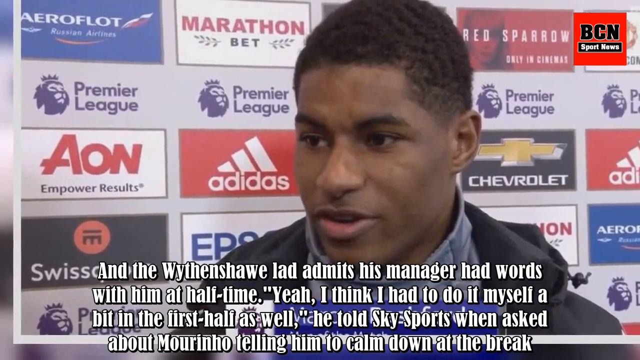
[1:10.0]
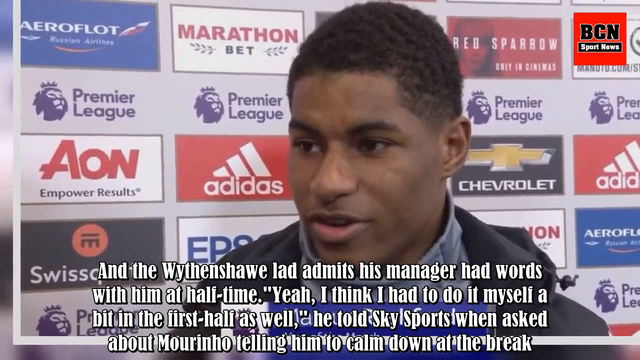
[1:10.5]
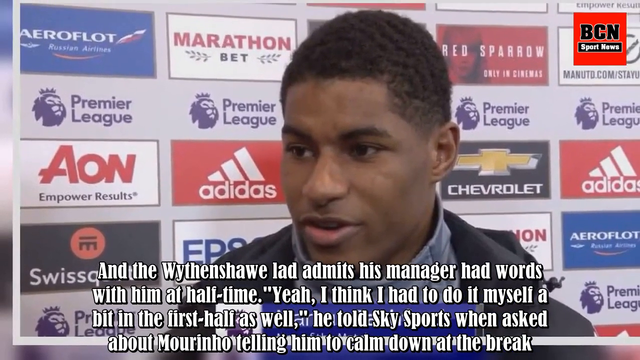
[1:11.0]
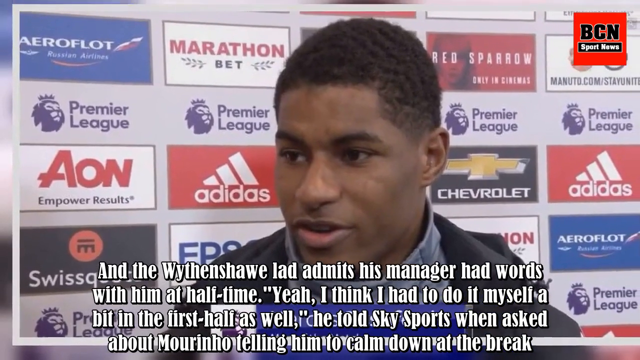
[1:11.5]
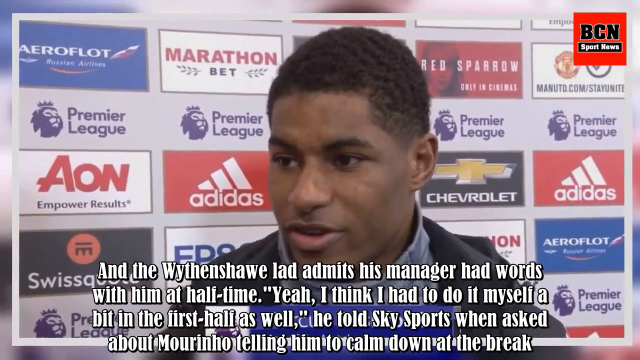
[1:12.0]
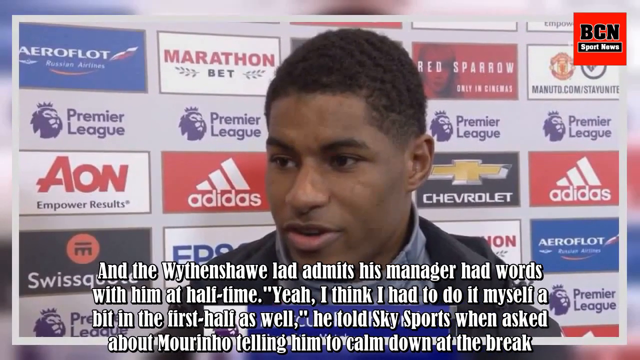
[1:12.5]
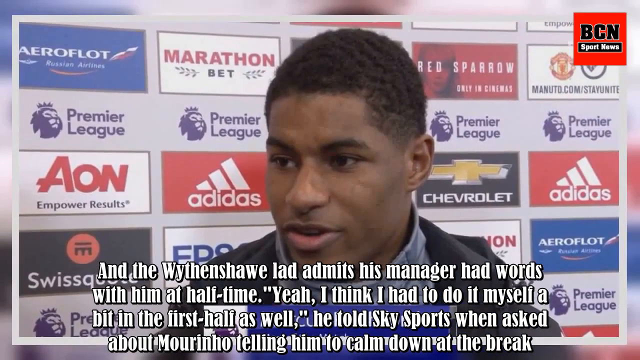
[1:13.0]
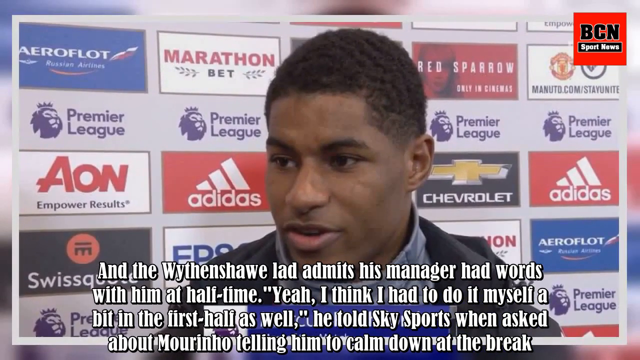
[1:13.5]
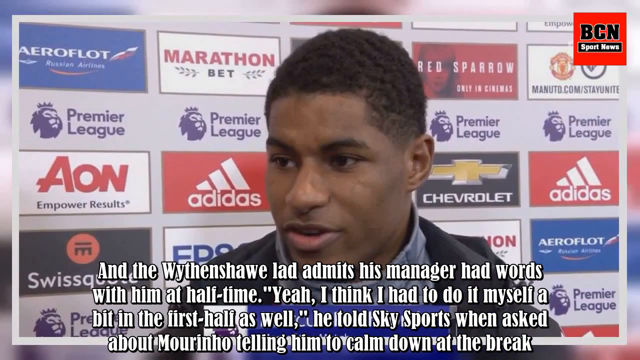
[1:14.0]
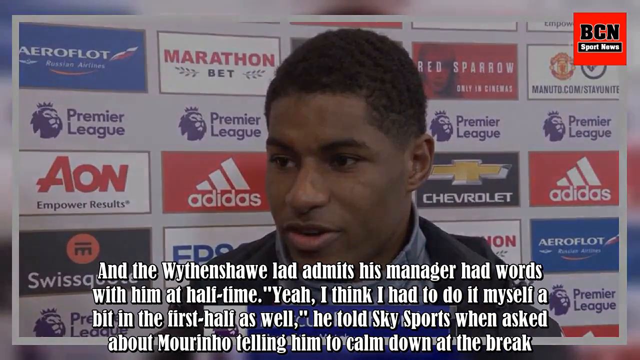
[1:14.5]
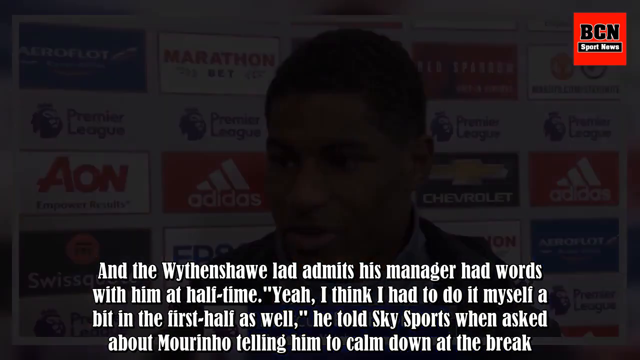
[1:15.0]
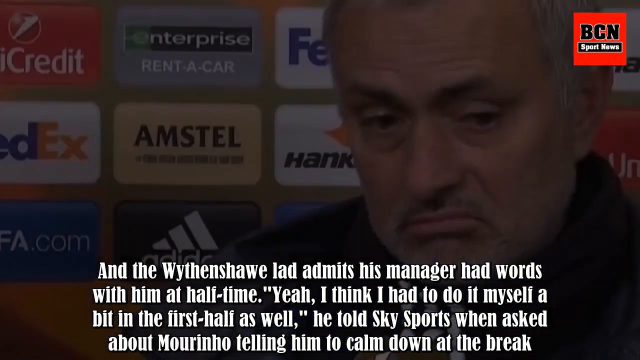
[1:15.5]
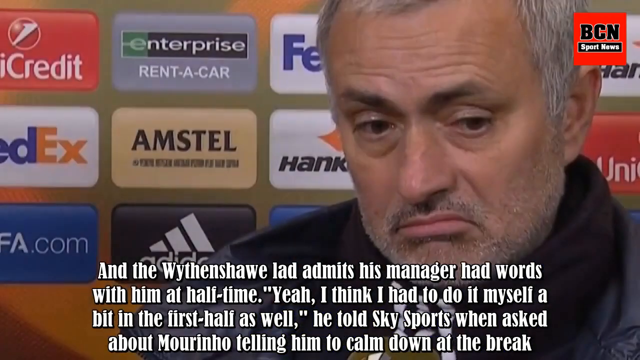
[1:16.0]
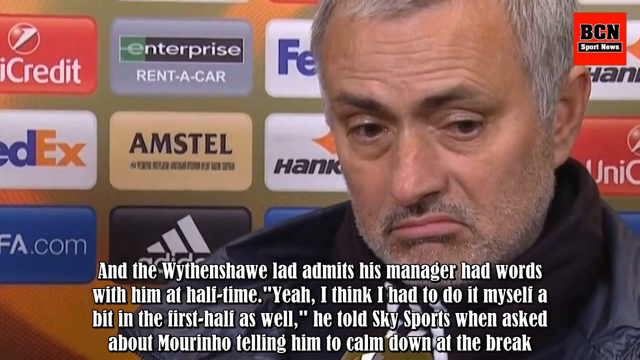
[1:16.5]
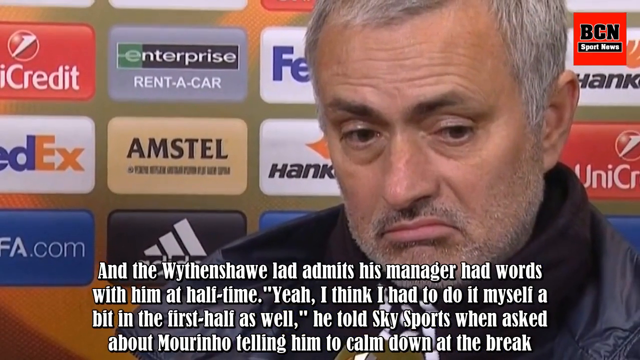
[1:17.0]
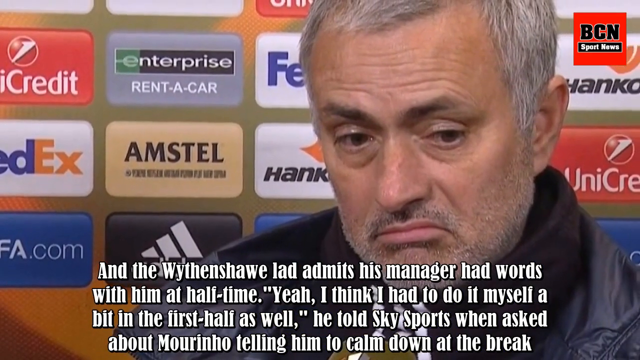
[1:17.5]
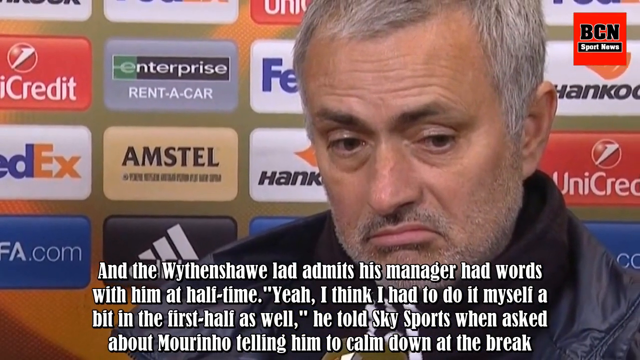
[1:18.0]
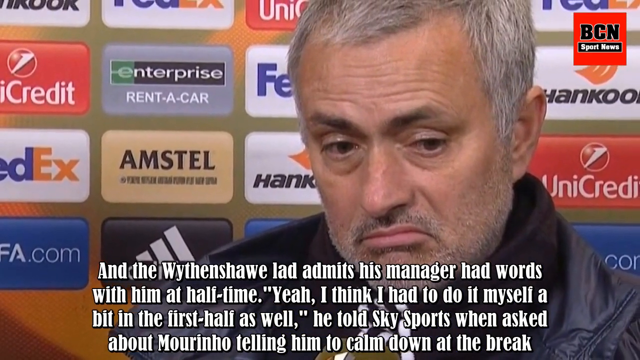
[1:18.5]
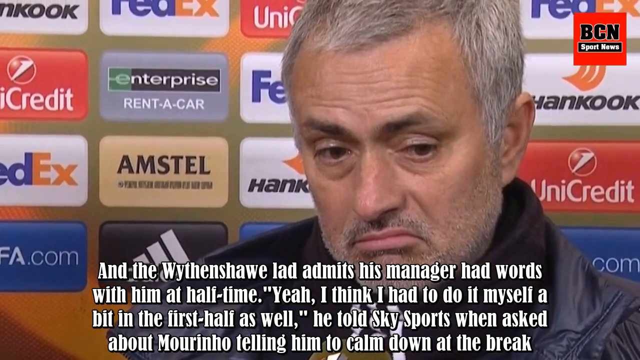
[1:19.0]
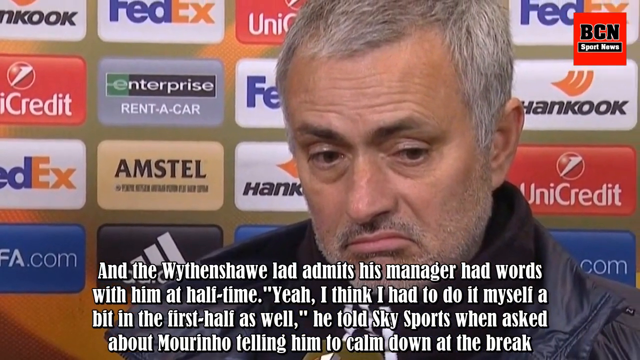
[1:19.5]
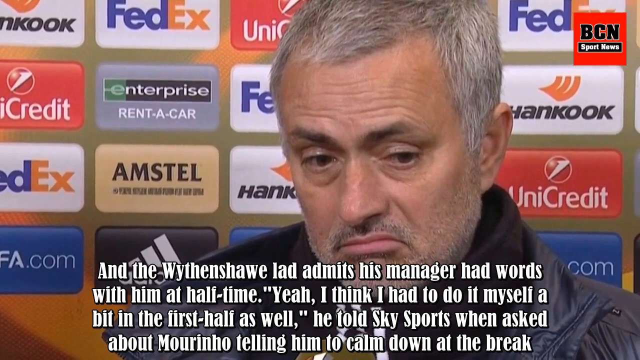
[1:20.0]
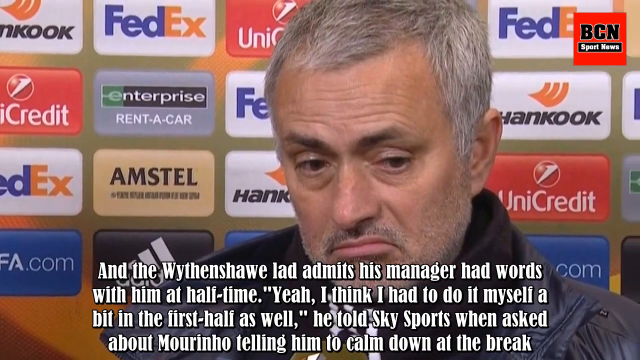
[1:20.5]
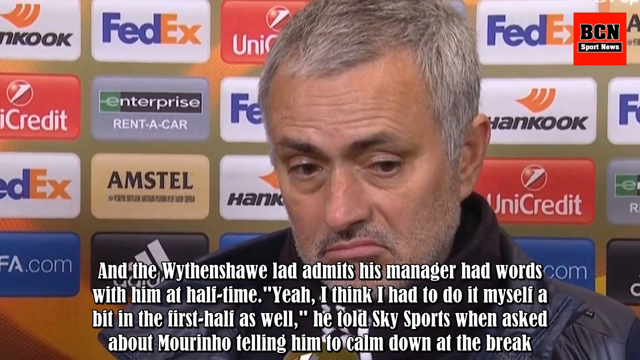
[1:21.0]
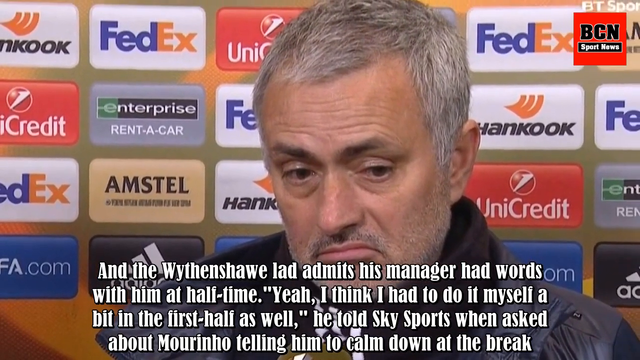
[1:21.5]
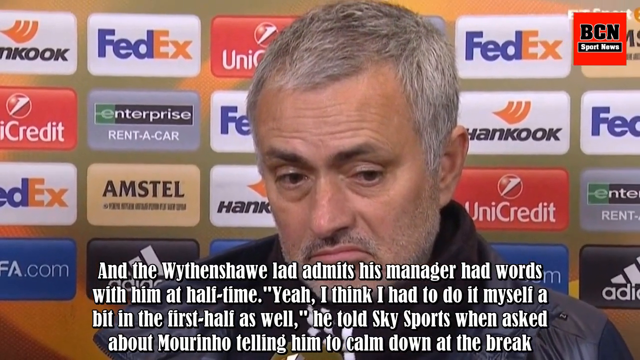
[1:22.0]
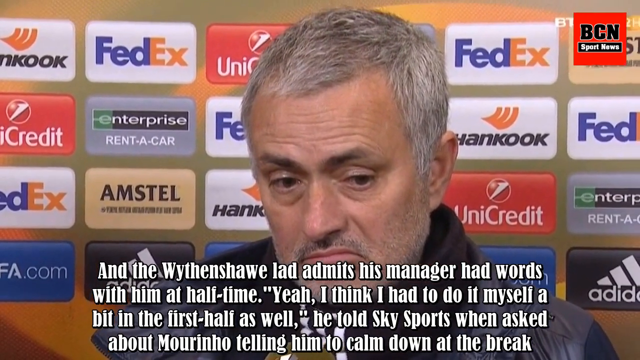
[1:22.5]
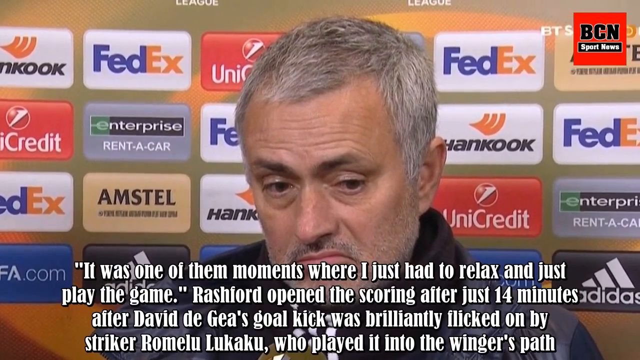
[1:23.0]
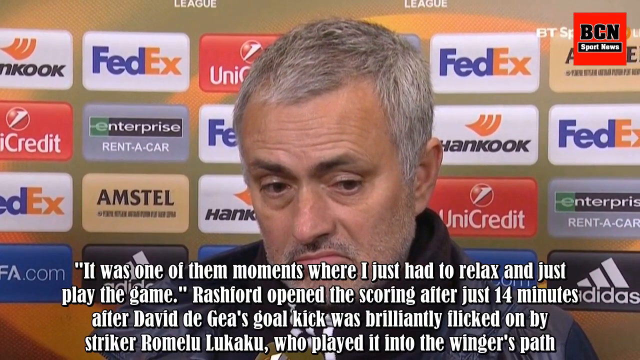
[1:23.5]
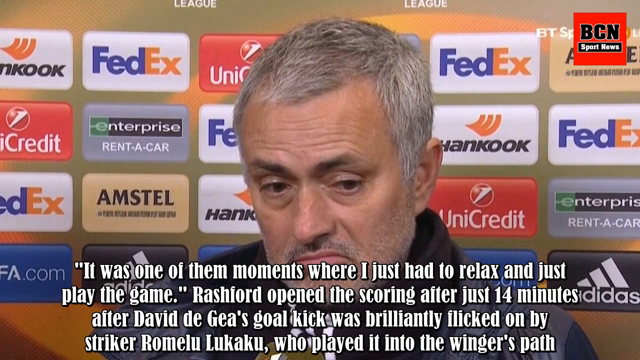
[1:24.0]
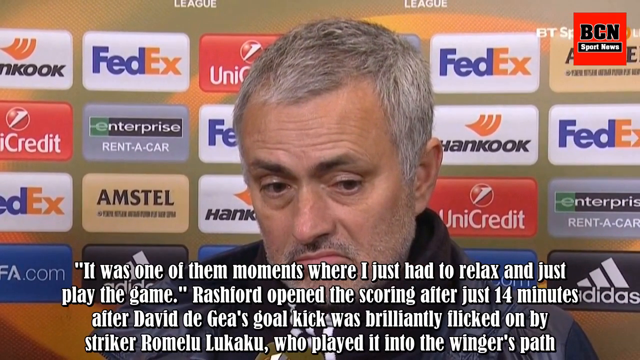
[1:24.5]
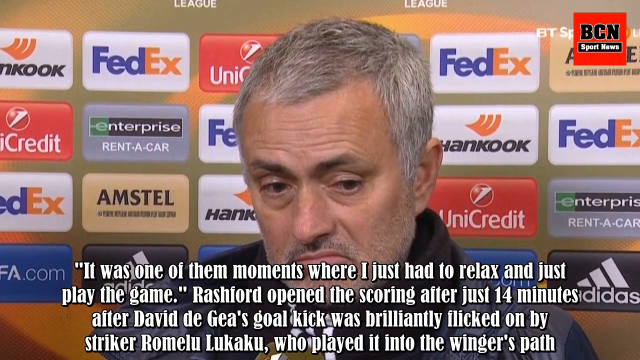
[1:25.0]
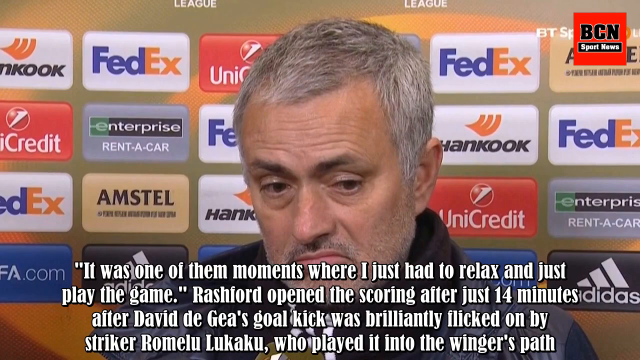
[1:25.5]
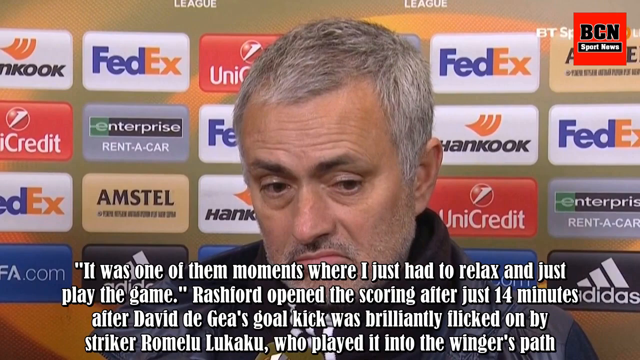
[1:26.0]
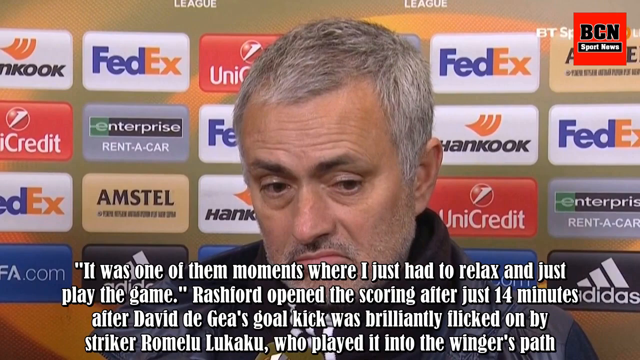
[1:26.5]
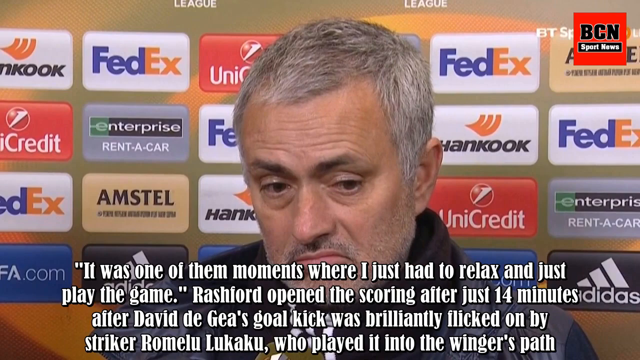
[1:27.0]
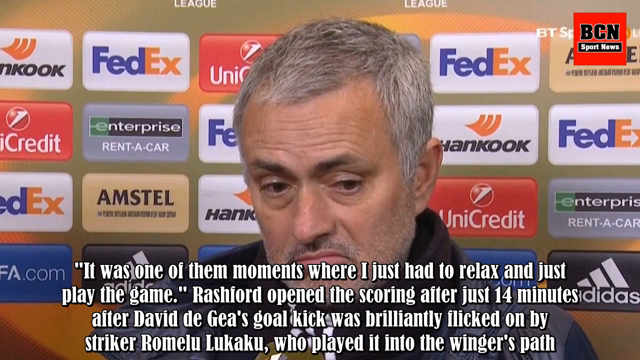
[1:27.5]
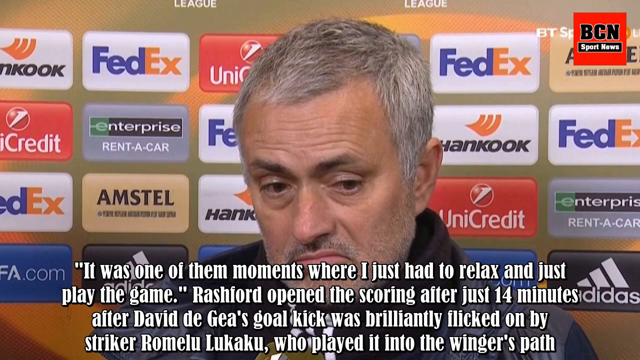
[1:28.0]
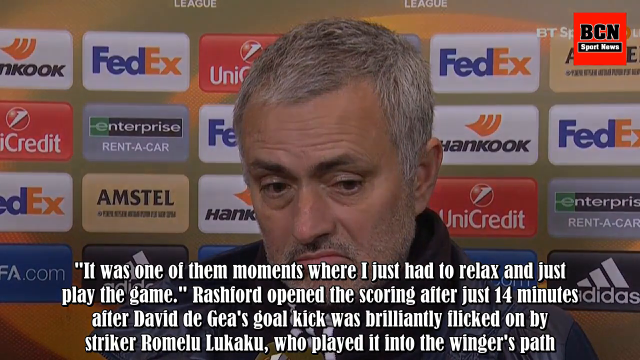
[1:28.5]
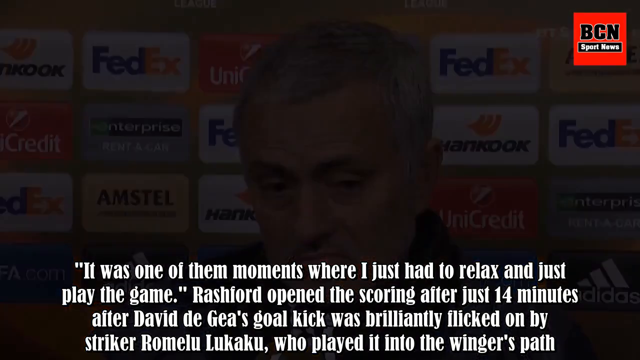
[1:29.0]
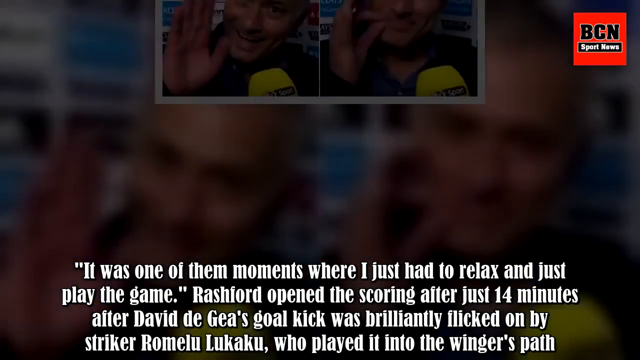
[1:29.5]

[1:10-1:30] The individual who wore the soccer uniform now has on what seem like regular clothes and is speaking to someone. On-screen text mentions Wythenshawe and reads "lad admits his manager had words with him at halftime," then continues. The BCN Sports News logo is in the right-hand corner. This fades out to another person, apparently the coach, who looks kind of sad; text reads "it was one of the moments where I just had to relax and just play the game," followed by more information. This person, who has gray silver hair, is looking down and looks kind of sad. The view then pans back to the dual photo of the individual, one with a hand up and the other with the hand making a cigarette-type gesture toward the face, as if smoking.